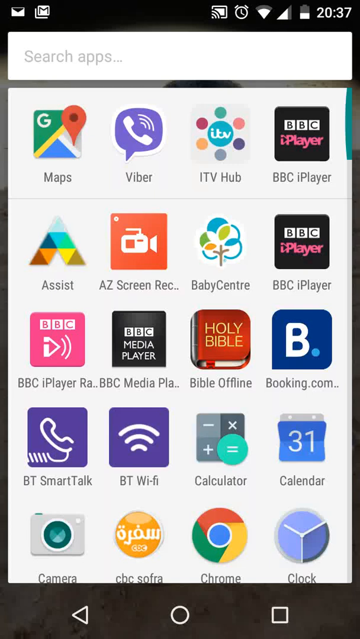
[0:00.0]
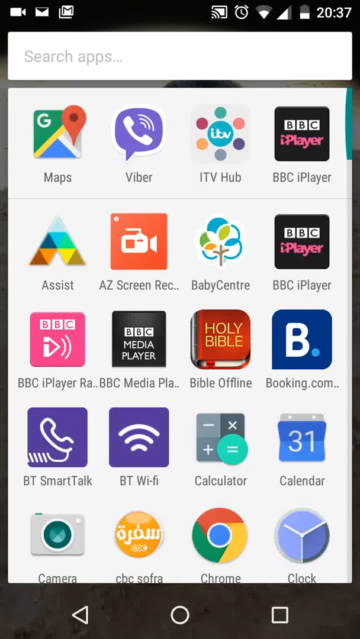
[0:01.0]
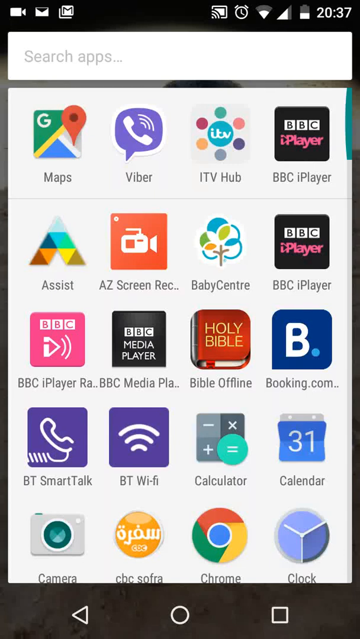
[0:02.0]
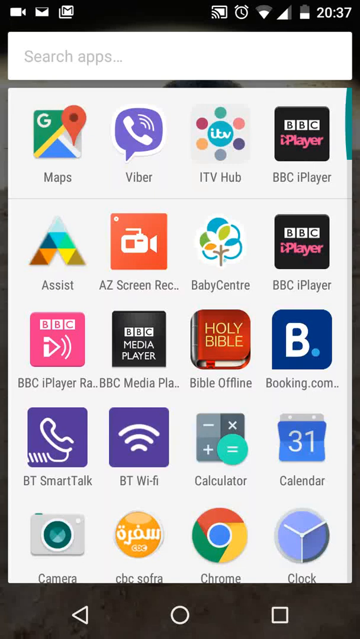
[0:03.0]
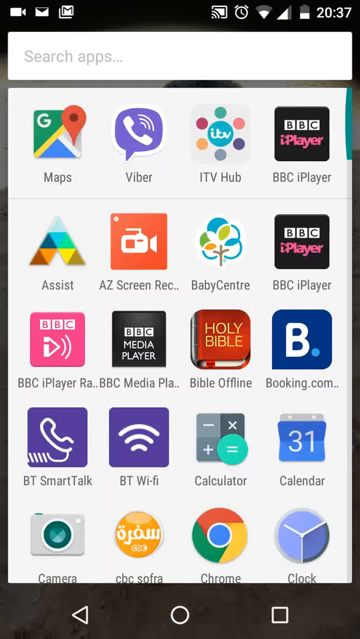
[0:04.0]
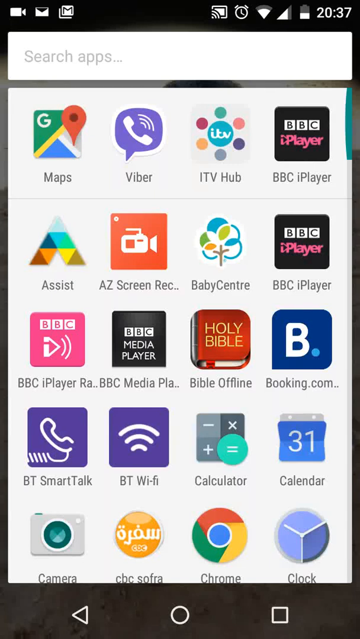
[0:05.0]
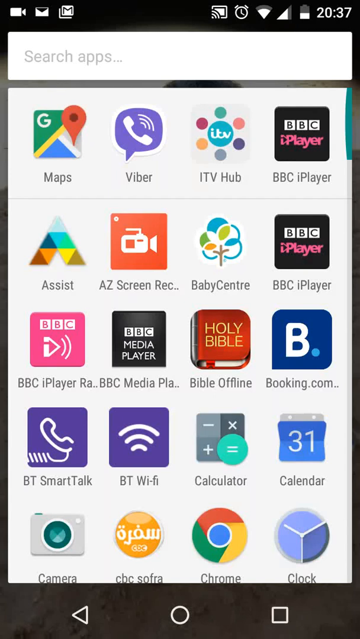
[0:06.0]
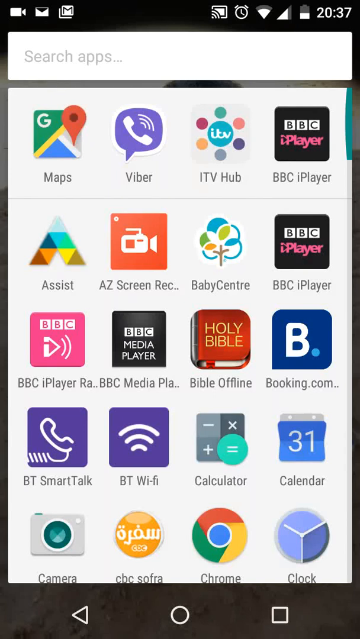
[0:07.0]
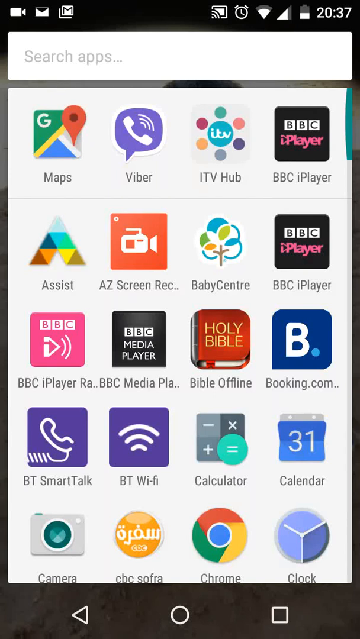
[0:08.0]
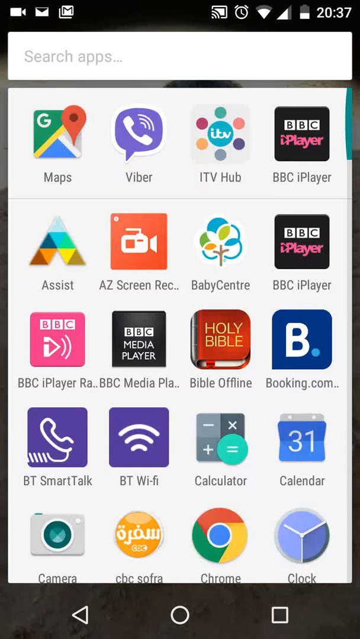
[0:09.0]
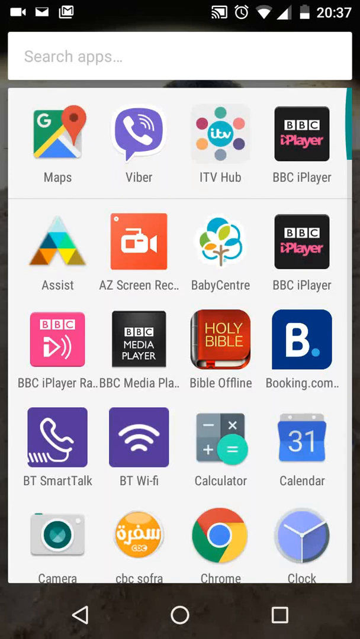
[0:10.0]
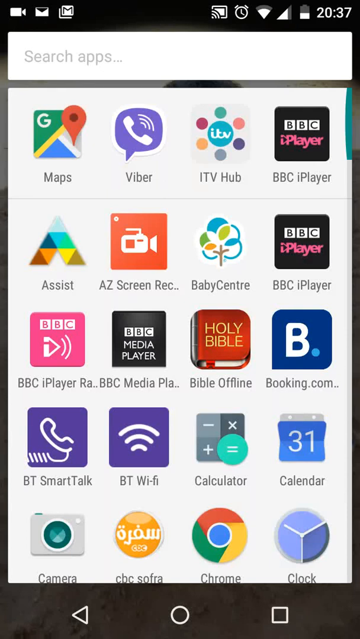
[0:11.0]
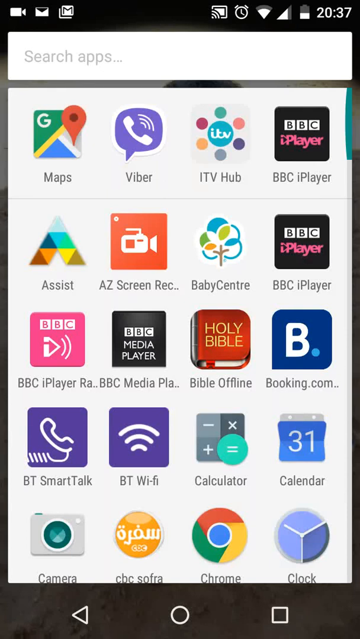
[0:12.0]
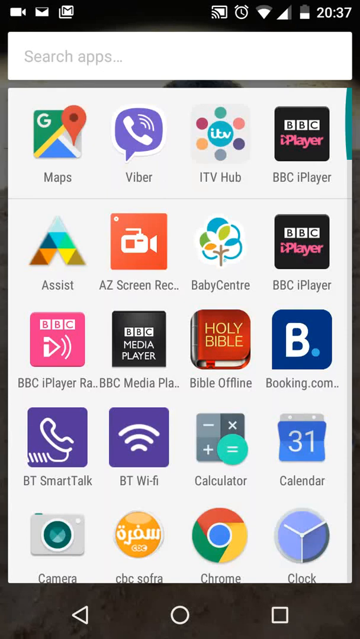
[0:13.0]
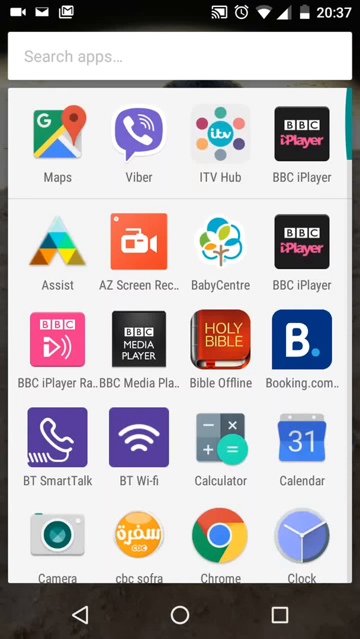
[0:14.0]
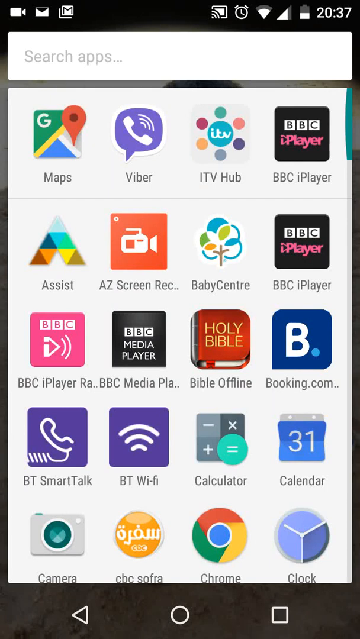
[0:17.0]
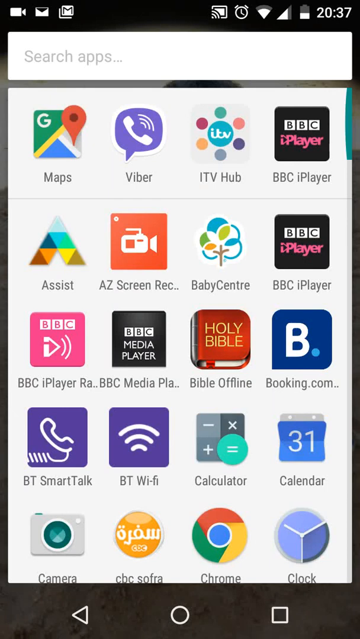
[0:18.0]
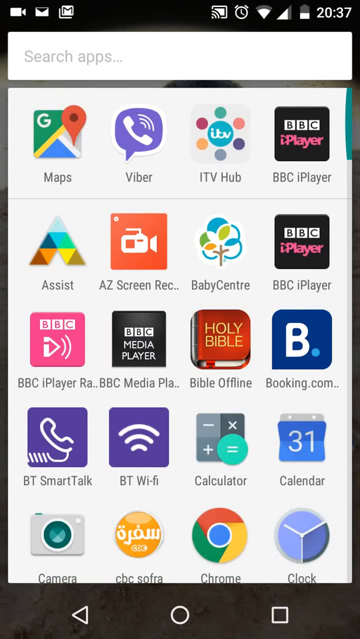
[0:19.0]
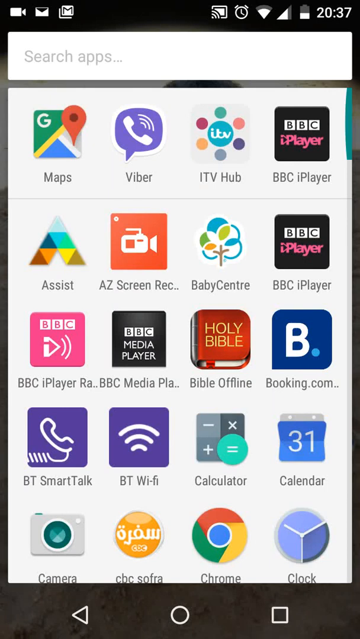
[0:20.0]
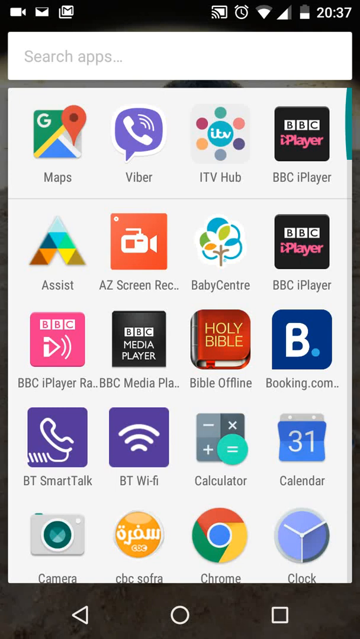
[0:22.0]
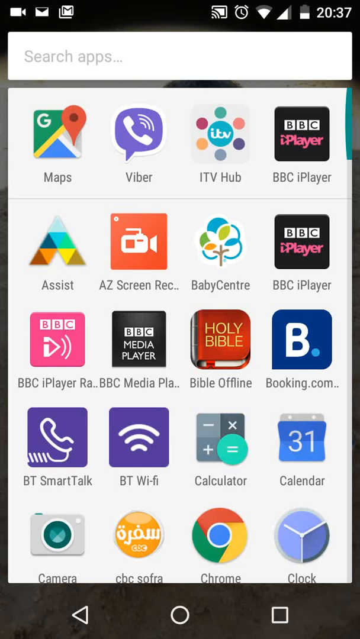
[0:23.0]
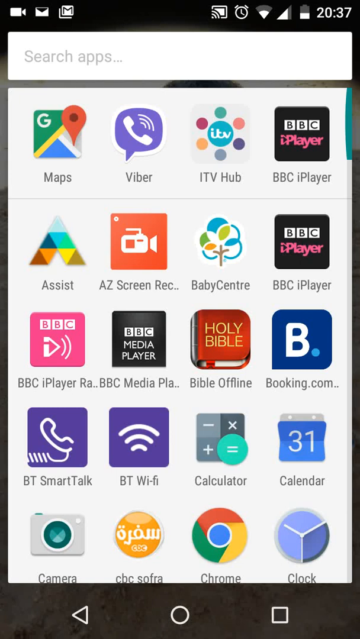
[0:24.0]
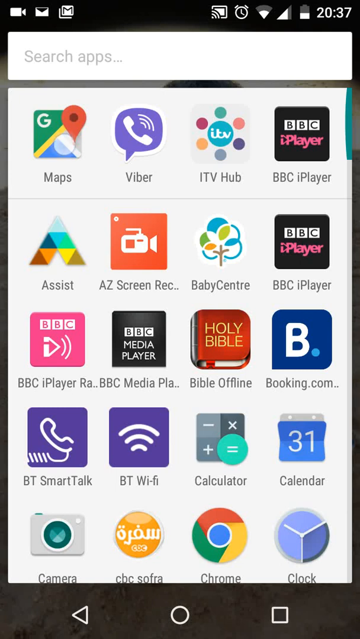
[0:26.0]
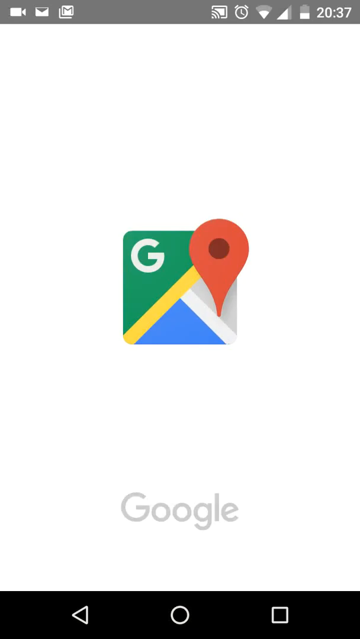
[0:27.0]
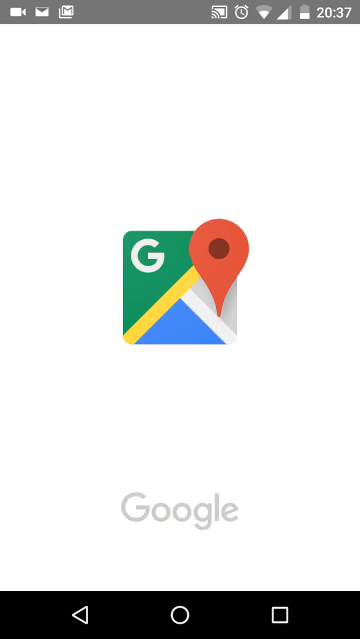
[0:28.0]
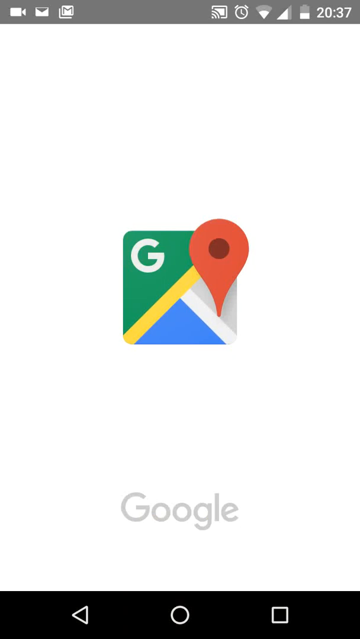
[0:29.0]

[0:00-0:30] A phone screen is shown, starting with the status bar at the top. It has a mail icon with a logo to the right of it, a Gmail icon, a Wi-Fi icon, an alarm clock, another Wi-Fi symbol that looks kind of like a funnel, and the time in military time. Underneath is a text field for searching apps. Below it are colored app icons, four per row, with about five rows visible, each with its name underneath. The first row starts with Google Maps, a picture of a red pen and a G with green behind it, labeled "maps" underneath. Next is an icon like a phone with waves coming out of it on a purple comment-like bubble, labeled "Viber". Then comes a teal circle surrounded by a number of colored circles, labeled "ITV hub". The last app in the first row is BBC iPlayer, in pink with a black square on it.